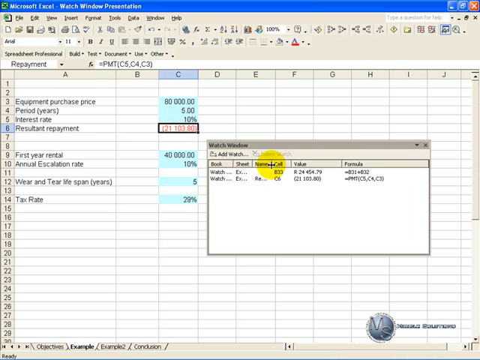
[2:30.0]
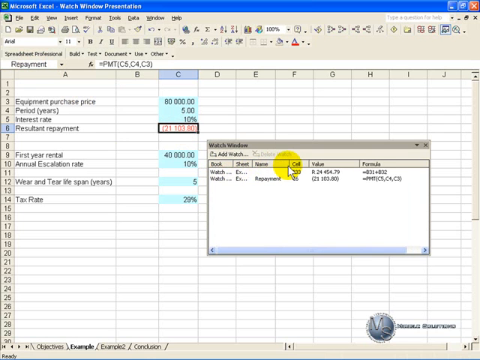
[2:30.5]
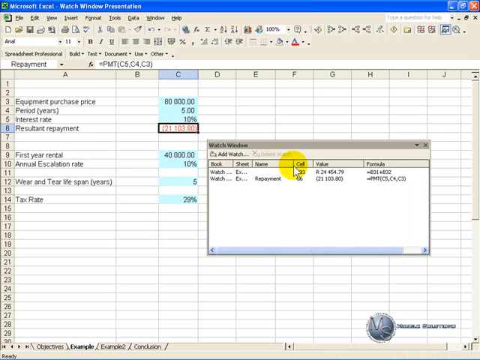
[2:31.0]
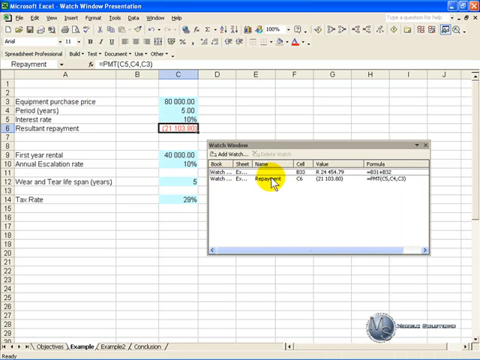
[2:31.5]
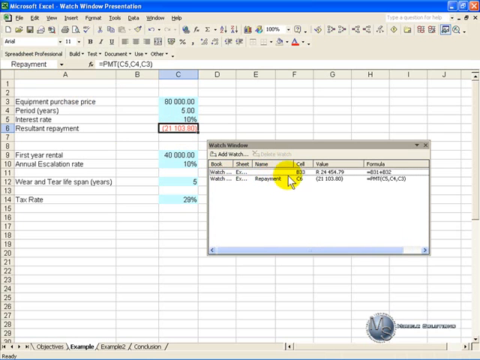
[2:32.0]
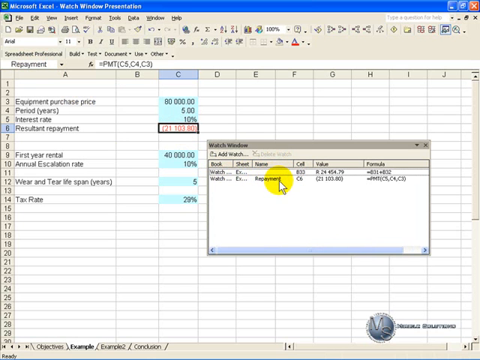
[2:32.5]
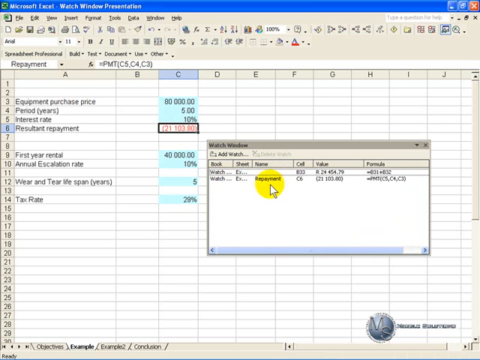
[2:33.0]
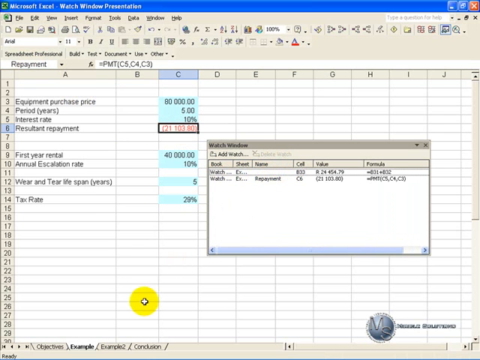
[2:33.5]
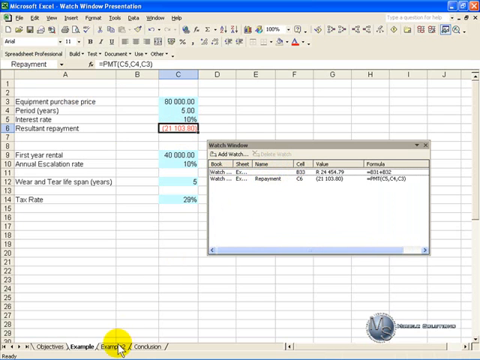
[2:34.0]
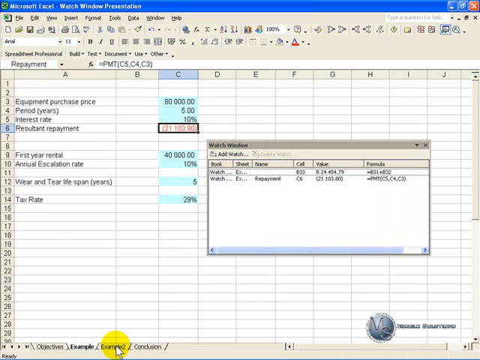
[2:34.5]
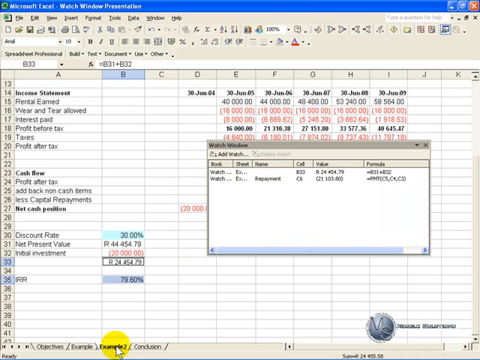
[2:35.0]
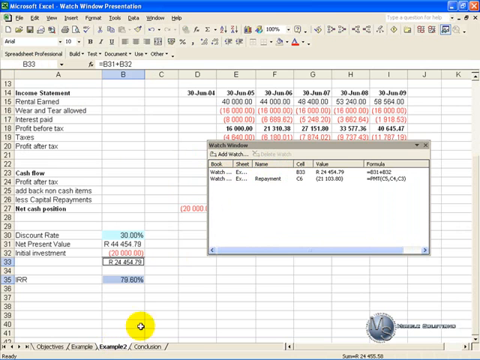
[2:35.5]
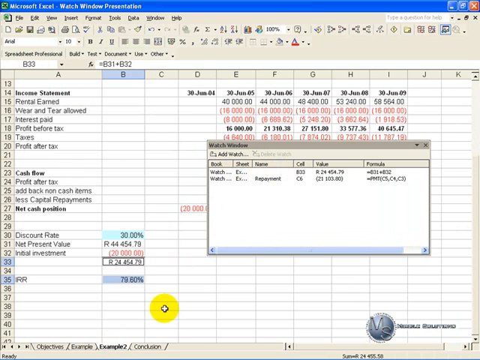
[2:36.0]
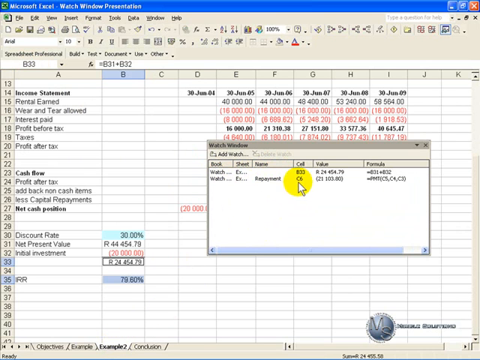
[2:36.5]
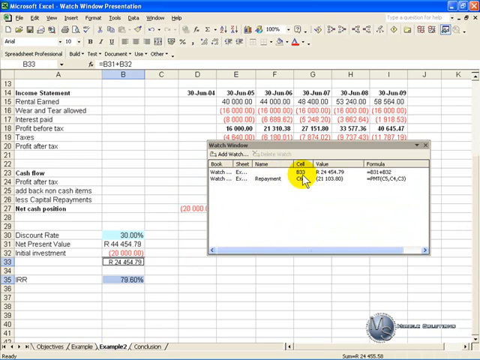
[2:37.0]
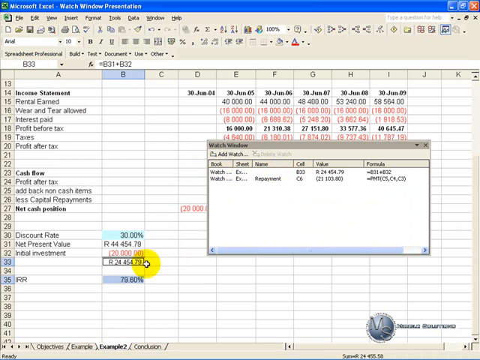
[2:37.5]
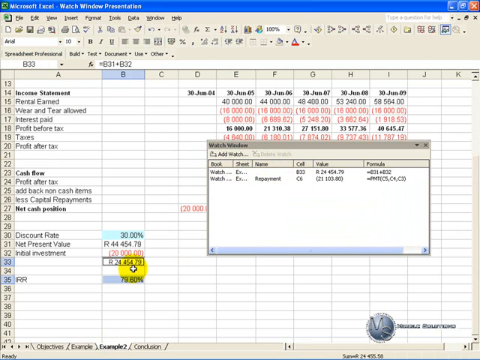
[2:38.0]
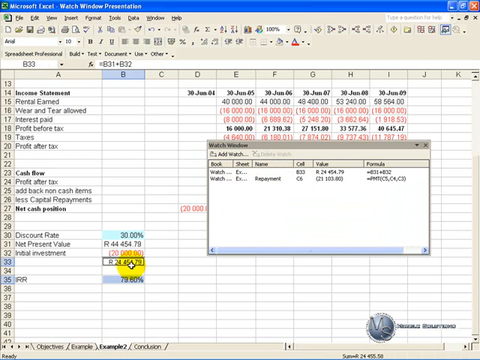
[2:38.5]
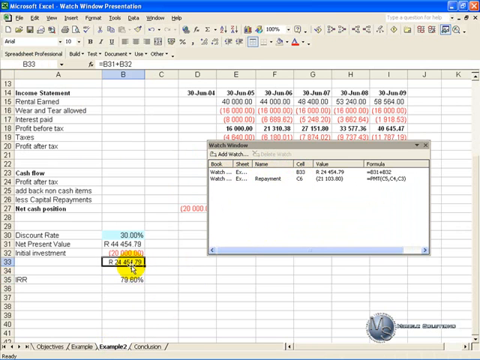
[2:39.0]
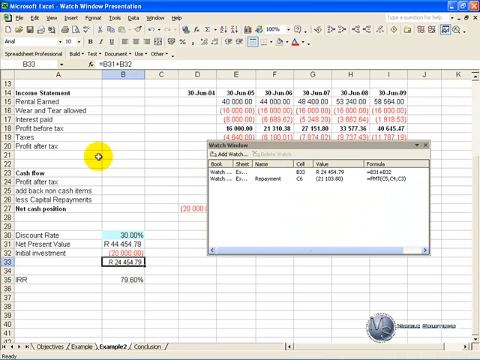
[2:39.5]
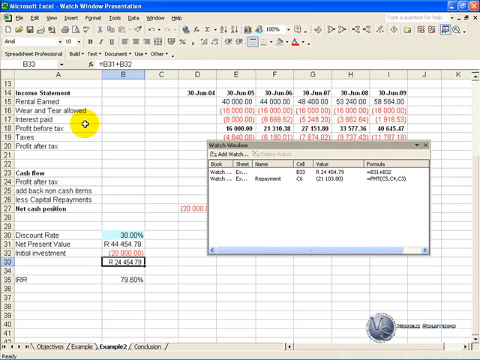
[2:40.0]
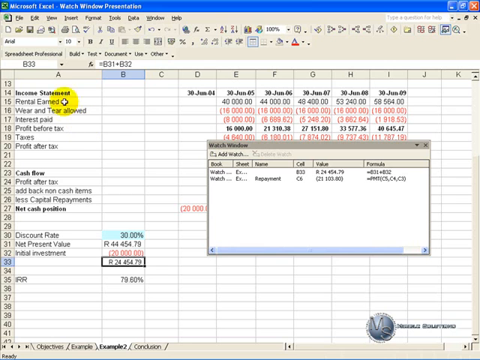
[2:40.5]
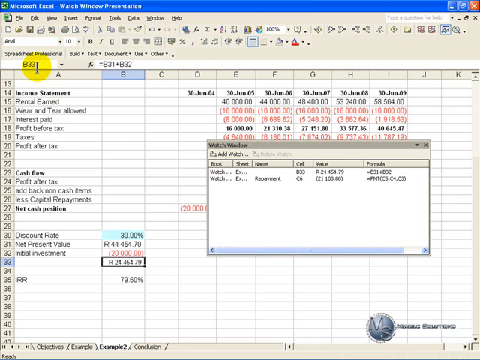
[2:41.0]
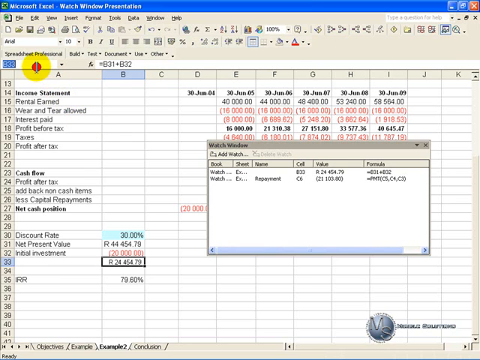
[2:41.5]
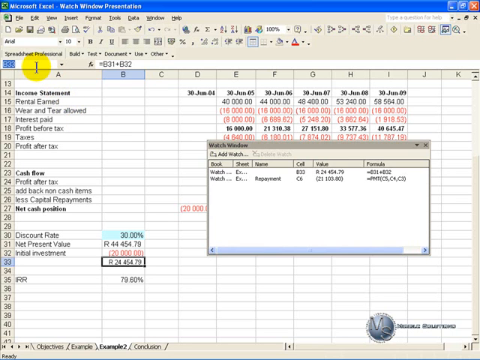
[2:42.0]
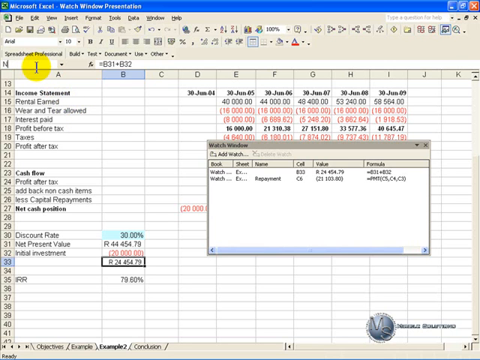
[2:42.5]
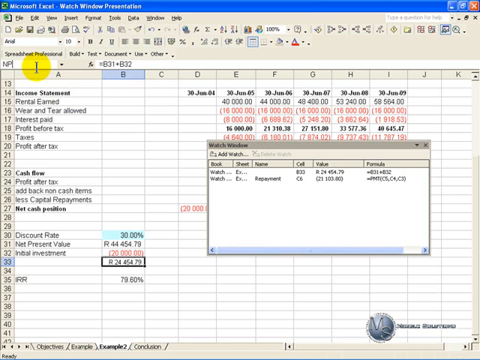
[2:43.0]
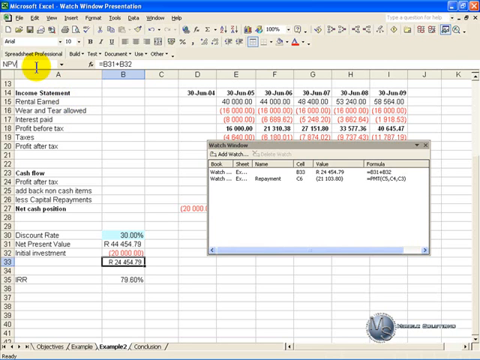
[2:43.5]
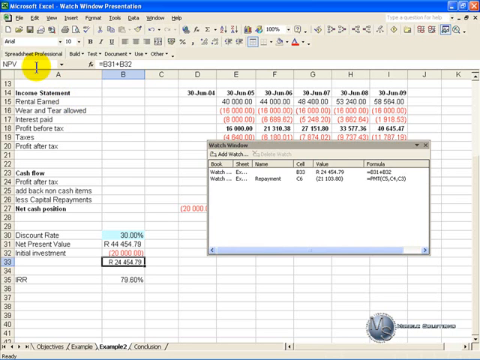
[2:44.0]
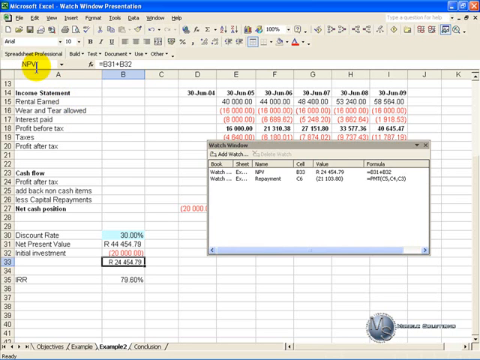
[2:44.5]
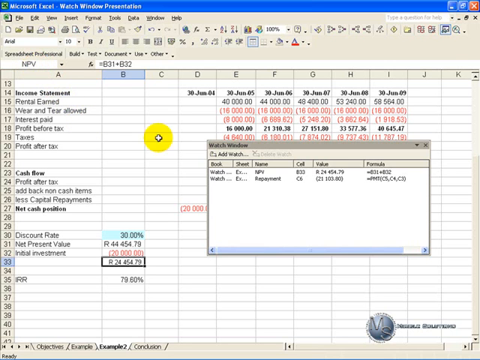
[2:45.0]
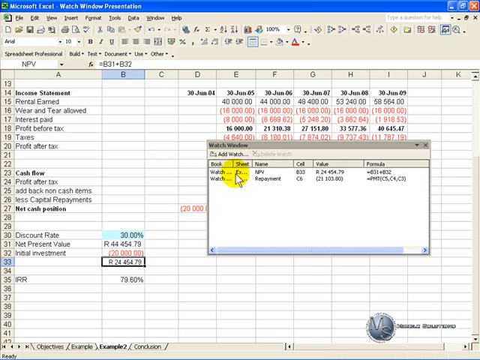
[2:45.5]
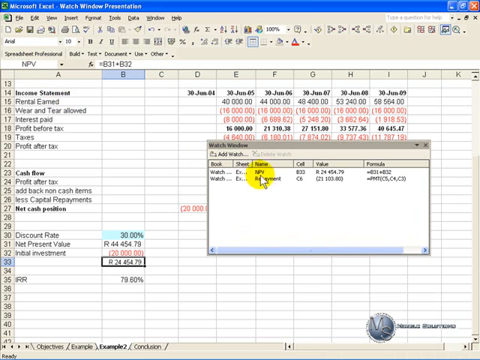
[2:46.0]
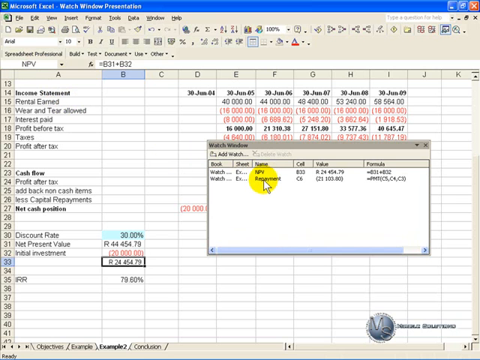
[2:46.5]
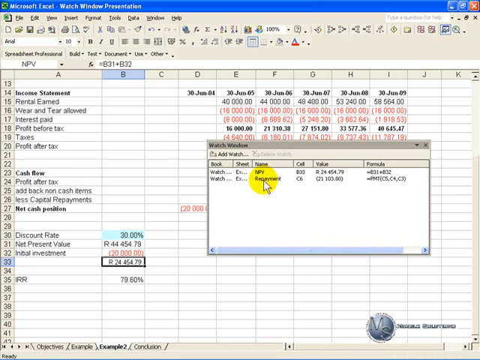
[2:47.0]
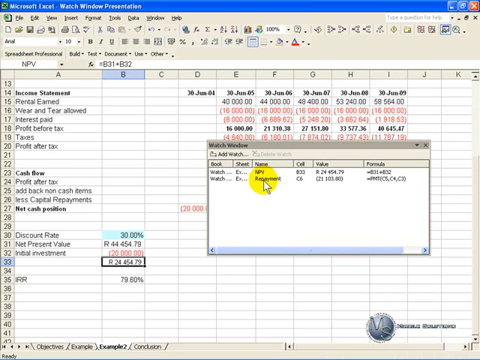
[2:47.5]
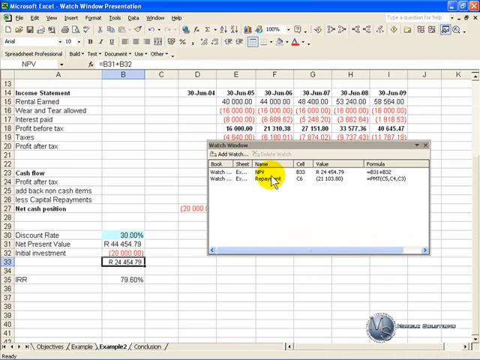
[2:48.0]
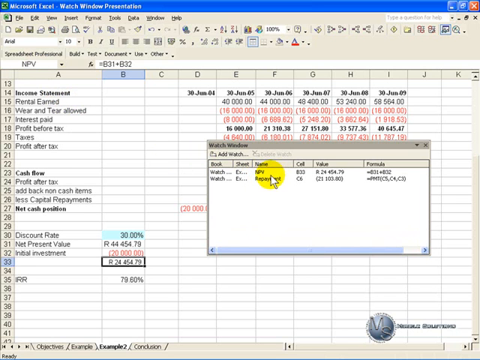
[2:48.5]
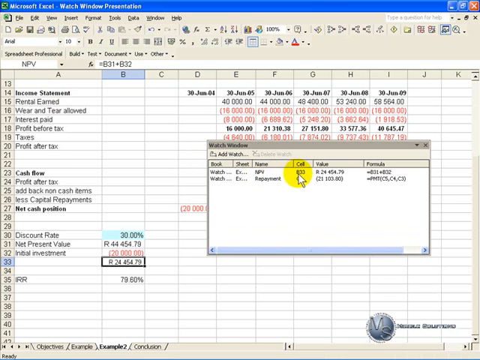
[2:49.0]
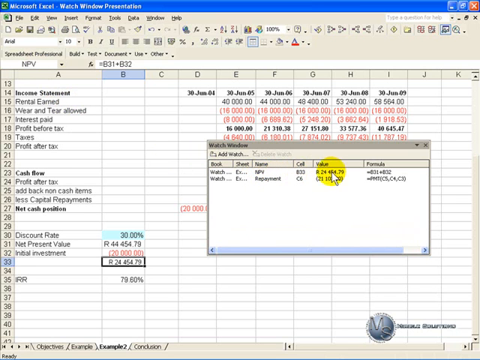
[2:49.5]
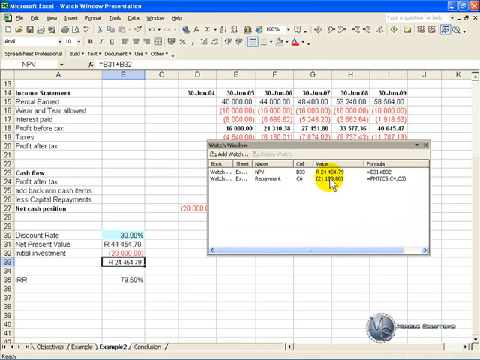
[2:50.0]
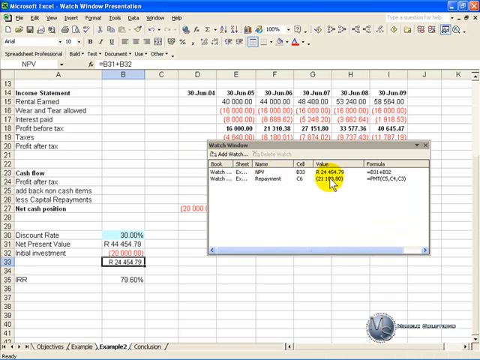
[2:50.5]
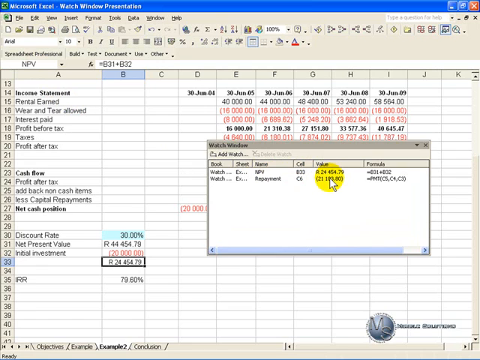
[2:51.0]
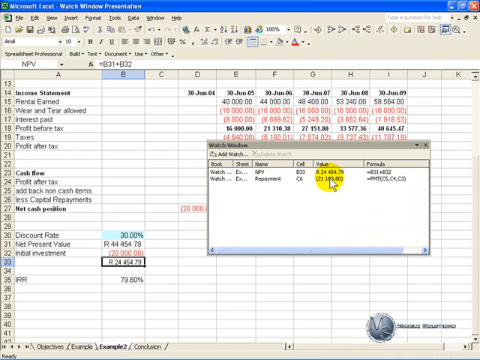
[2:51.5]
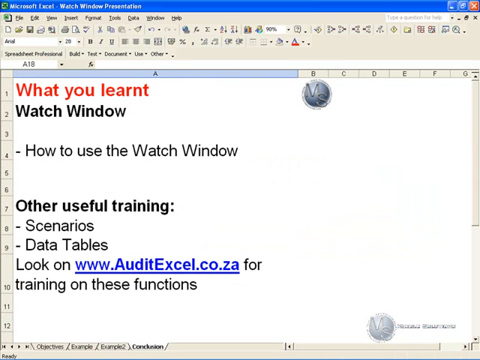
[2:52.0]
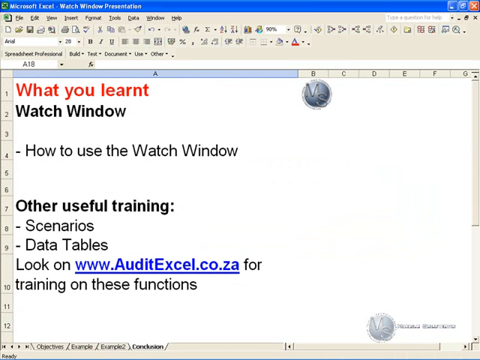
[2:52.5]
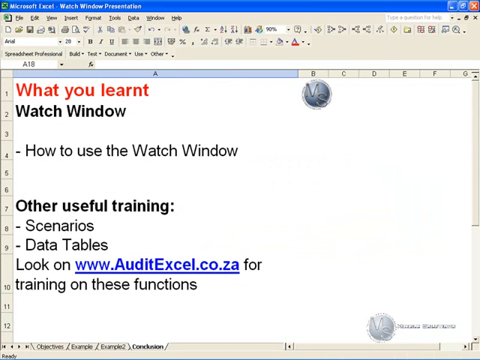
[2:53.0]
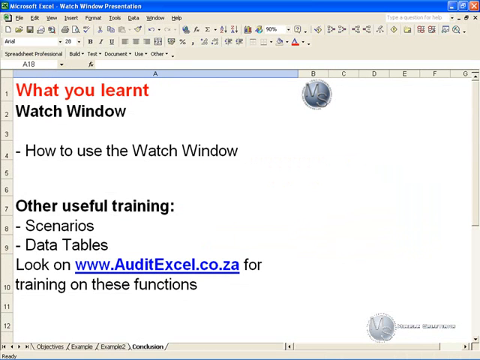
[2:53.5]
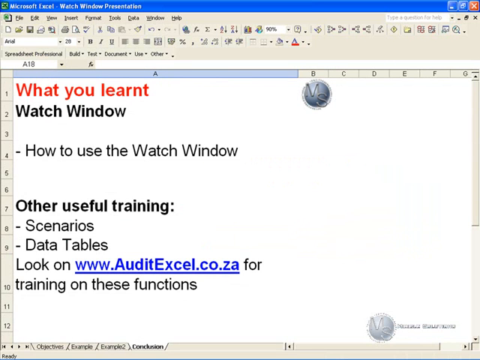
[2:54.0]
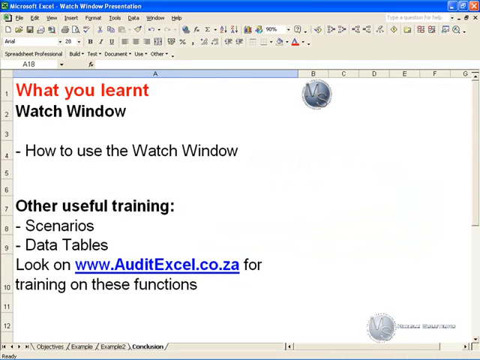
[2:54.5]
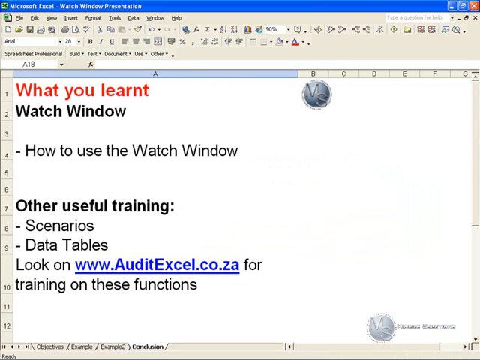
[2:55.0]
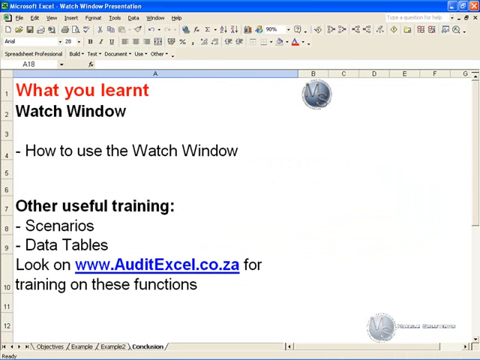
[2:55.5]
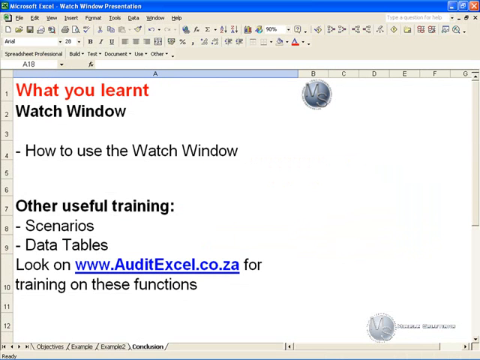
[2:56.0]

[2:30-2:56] The word "repayment" now appears in the name column of the watch window for C6, and the mouse kind of moves over it. The mouse then clicks the example 2 tab again, bringing up the tab with many filled cells. It goes to the watch window where B33 is listed, then clicks the B33 cell in the table, goes to the top left to enter a name, and names it "NPV"; the watch window now shows it named NPV. The mouse hovers over NPV, the cell and the number, then the value, with the yellow circle surrounding the value. The page changes to a screen reading "what you learnt, watch window, how to use watch window, other useful training, scenarios, data tables, look on www.audixxl.co.za for training on these functions."